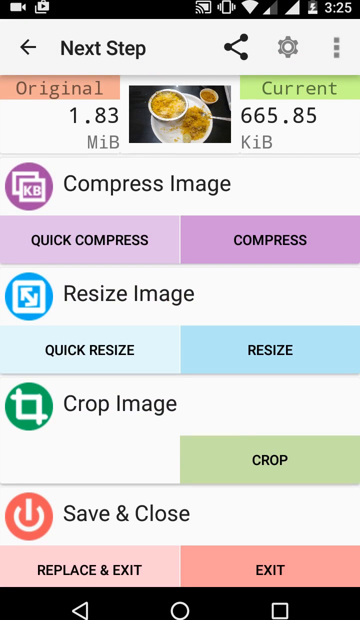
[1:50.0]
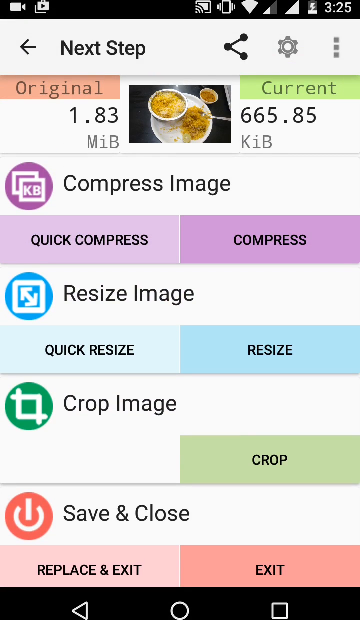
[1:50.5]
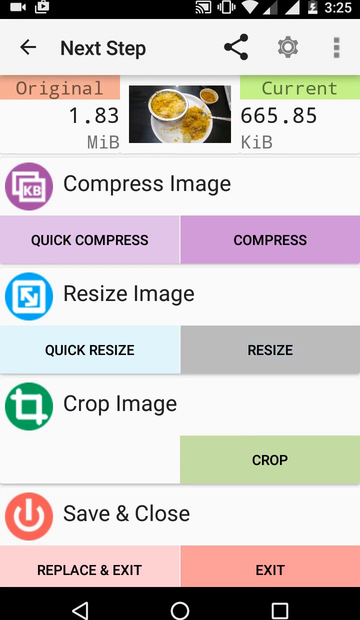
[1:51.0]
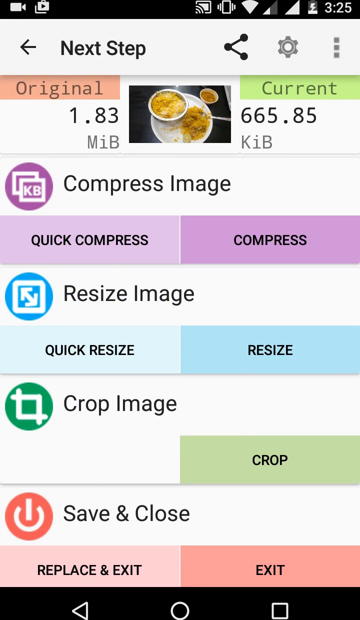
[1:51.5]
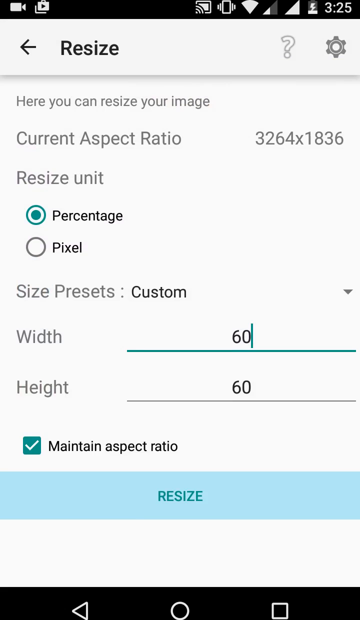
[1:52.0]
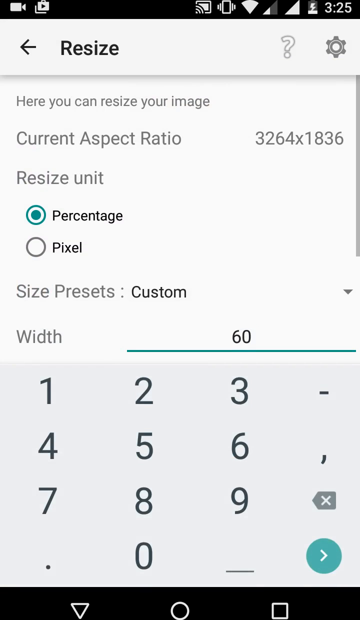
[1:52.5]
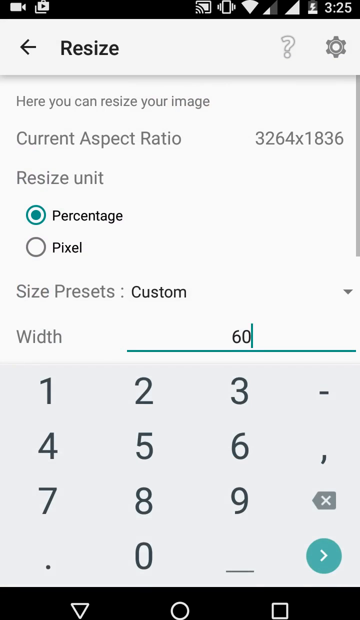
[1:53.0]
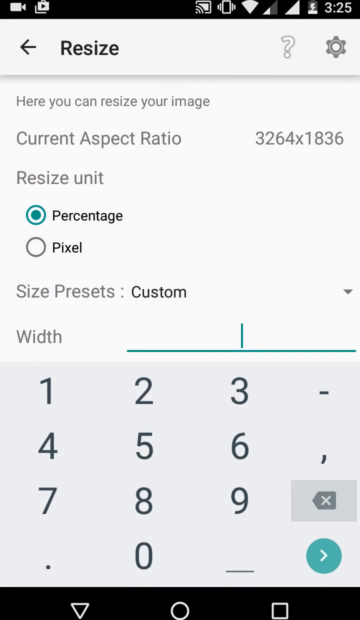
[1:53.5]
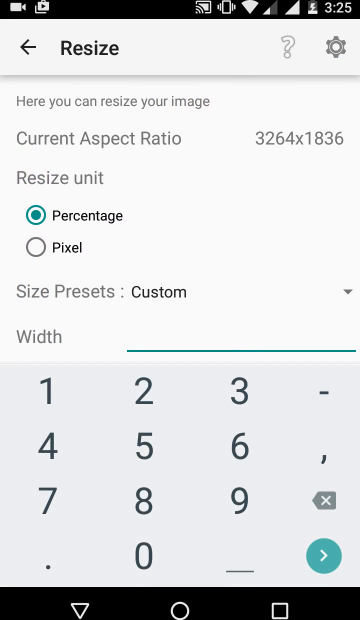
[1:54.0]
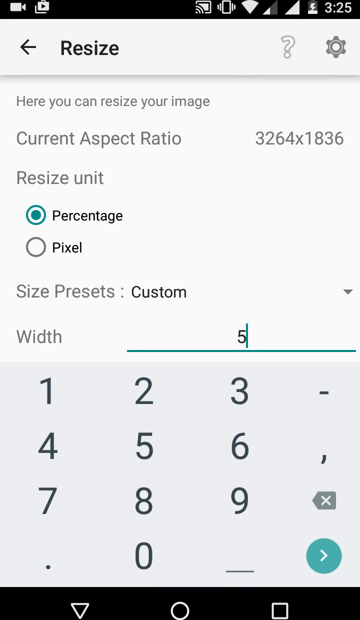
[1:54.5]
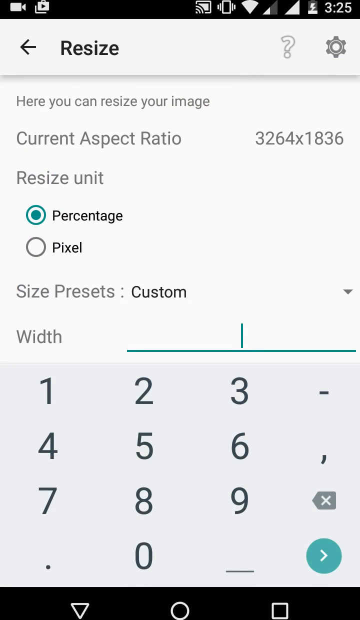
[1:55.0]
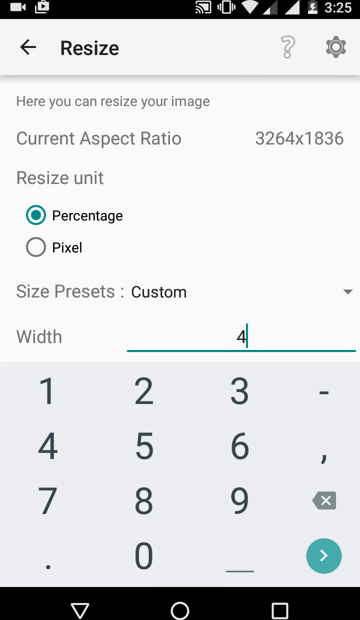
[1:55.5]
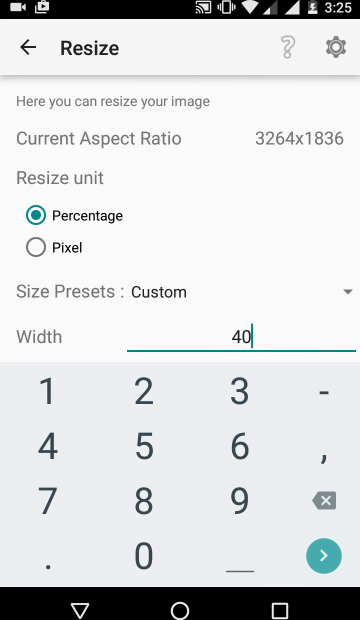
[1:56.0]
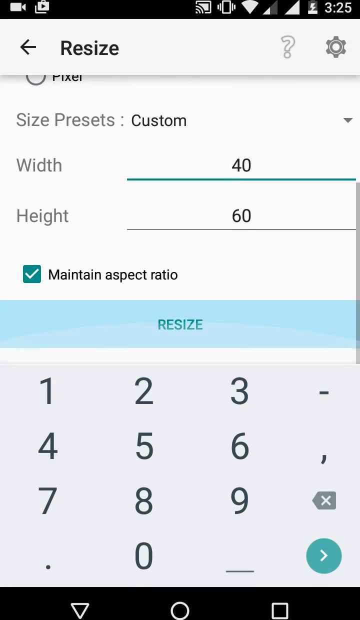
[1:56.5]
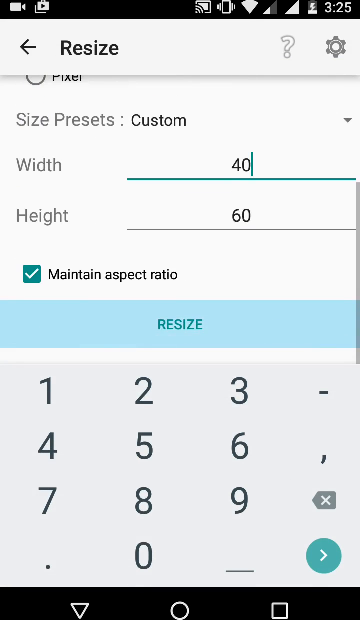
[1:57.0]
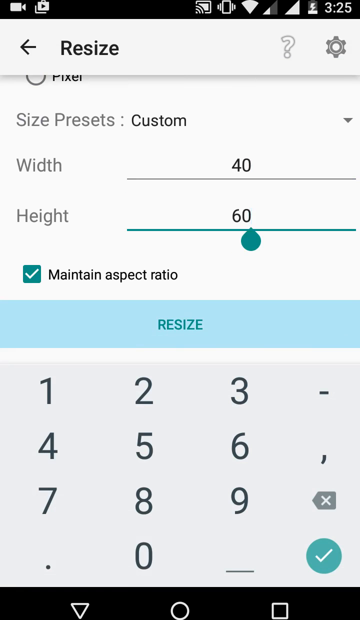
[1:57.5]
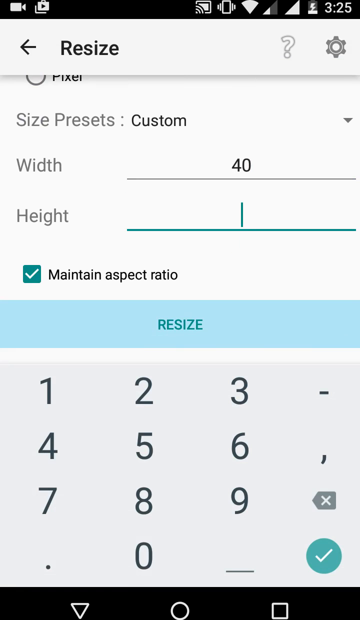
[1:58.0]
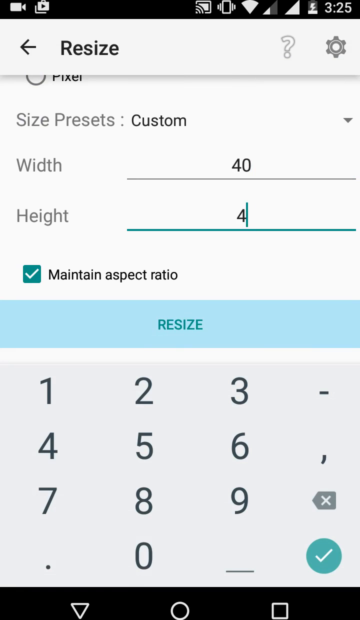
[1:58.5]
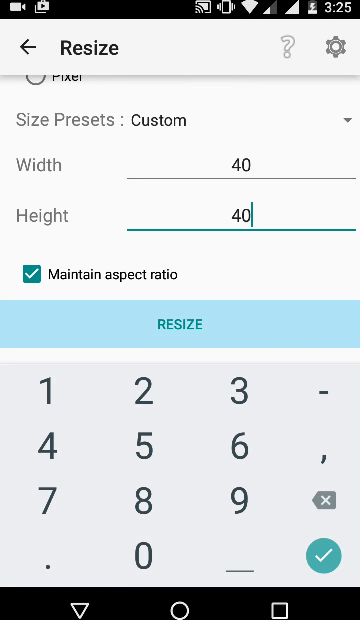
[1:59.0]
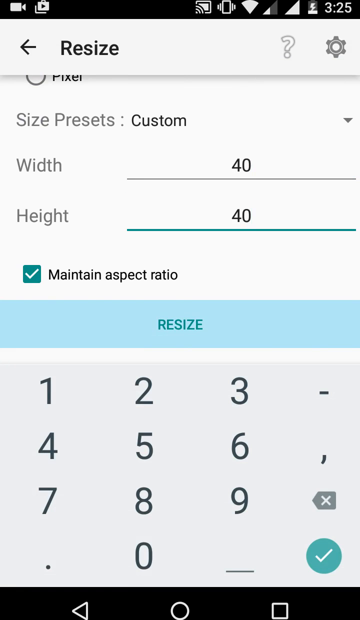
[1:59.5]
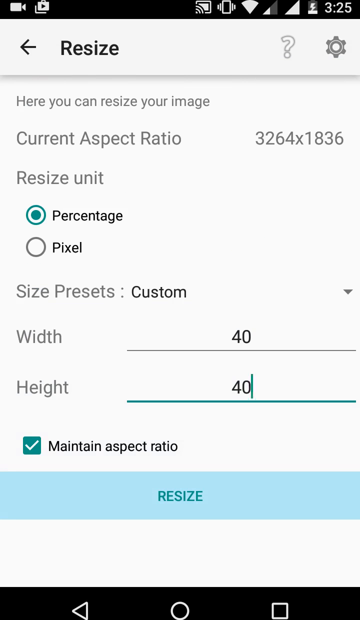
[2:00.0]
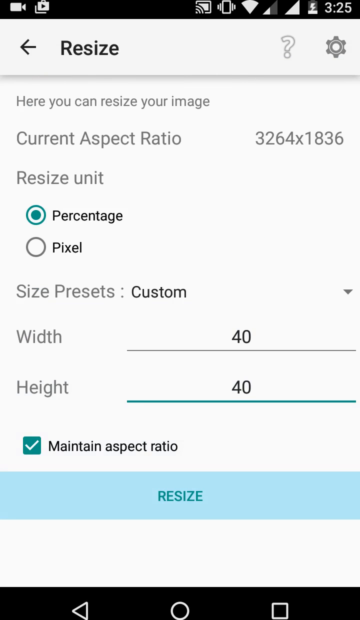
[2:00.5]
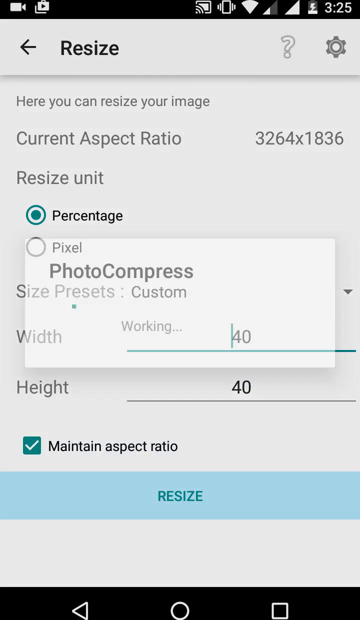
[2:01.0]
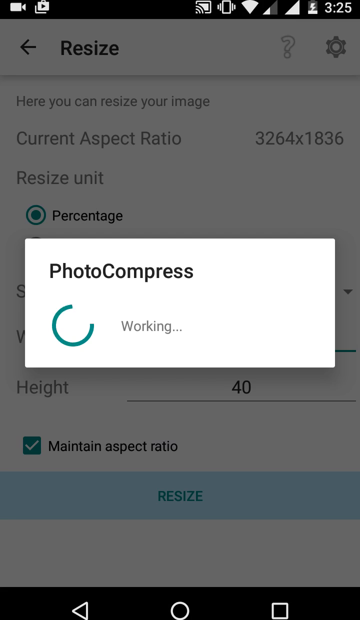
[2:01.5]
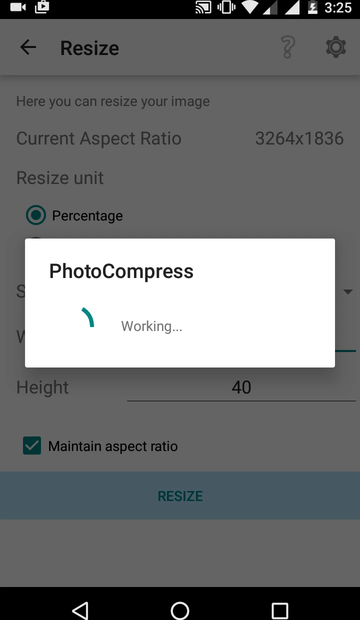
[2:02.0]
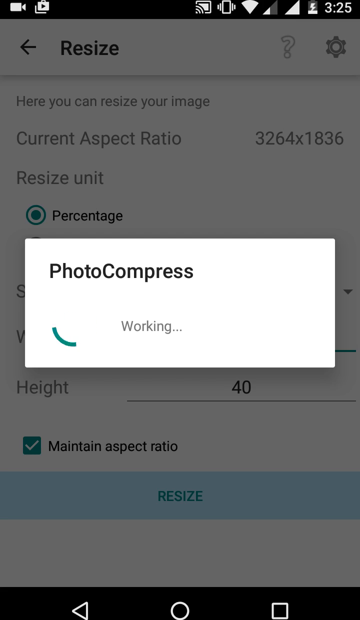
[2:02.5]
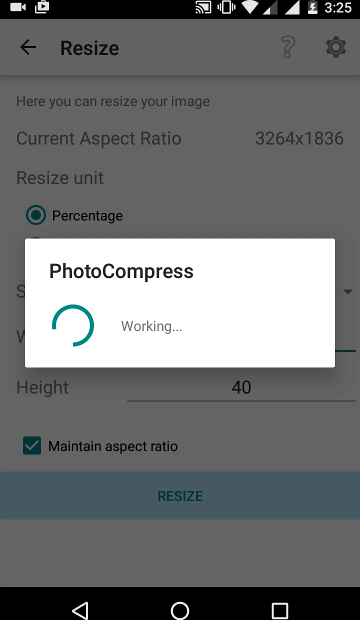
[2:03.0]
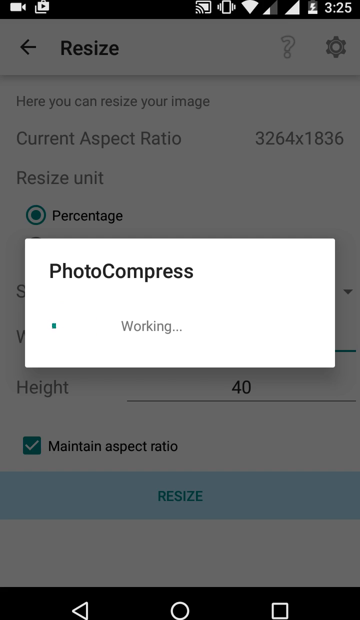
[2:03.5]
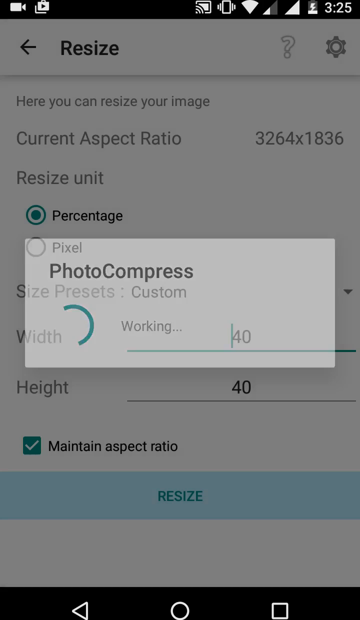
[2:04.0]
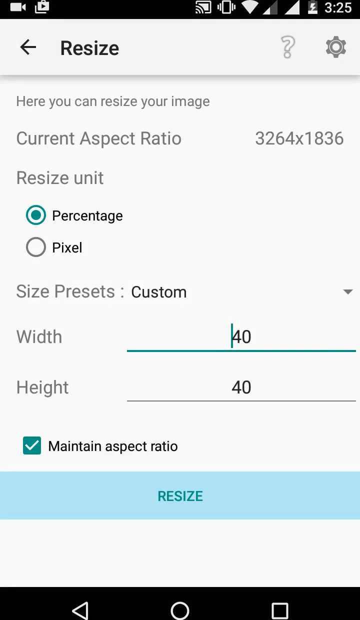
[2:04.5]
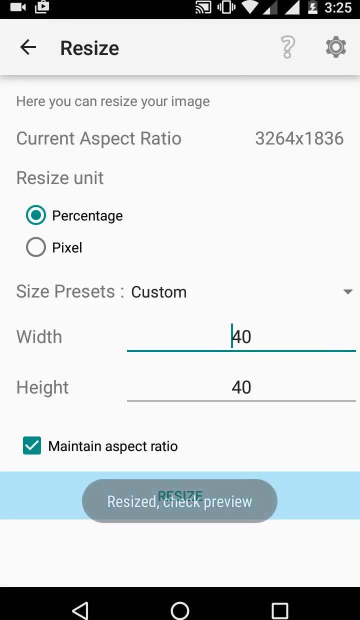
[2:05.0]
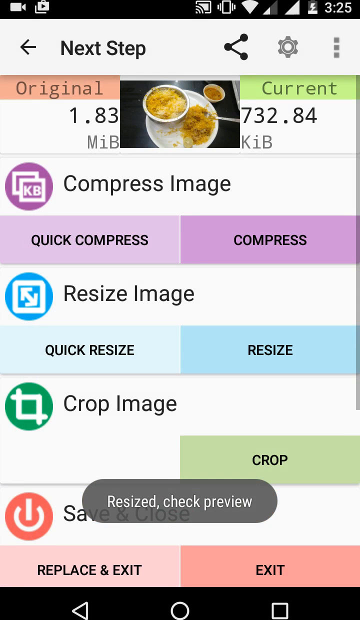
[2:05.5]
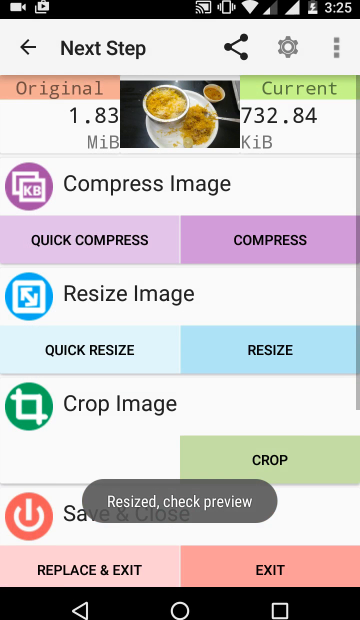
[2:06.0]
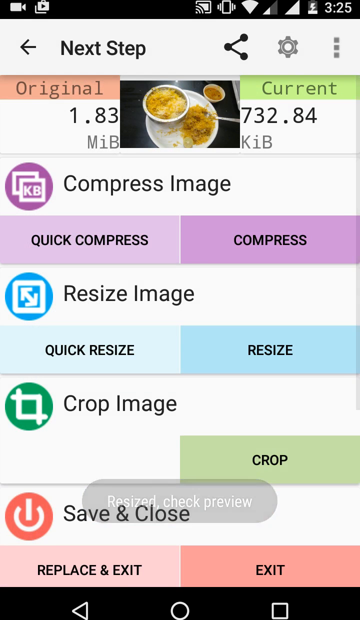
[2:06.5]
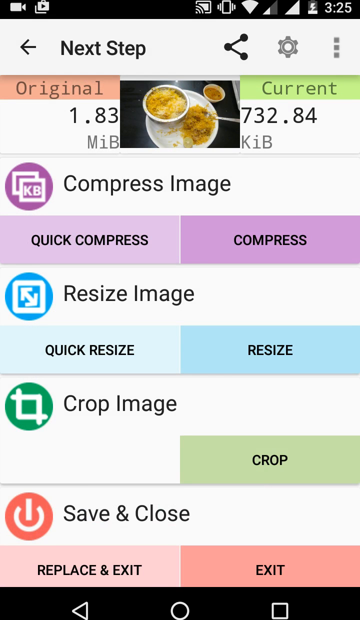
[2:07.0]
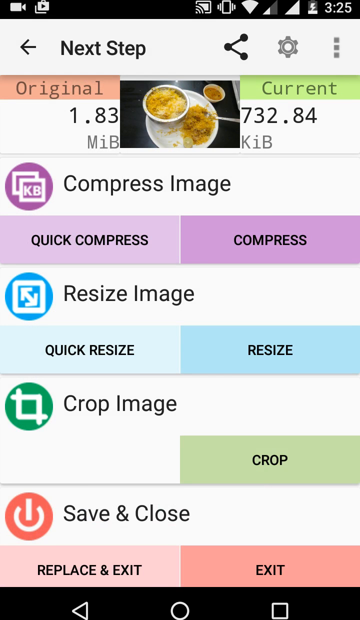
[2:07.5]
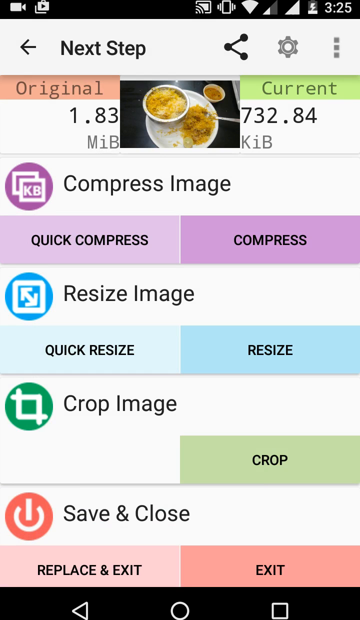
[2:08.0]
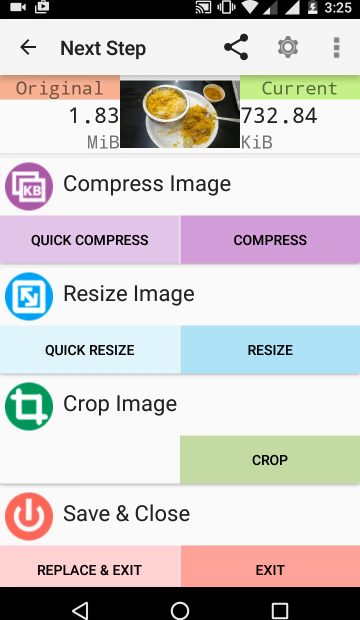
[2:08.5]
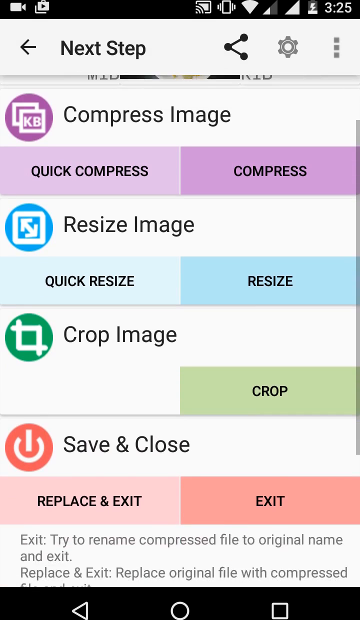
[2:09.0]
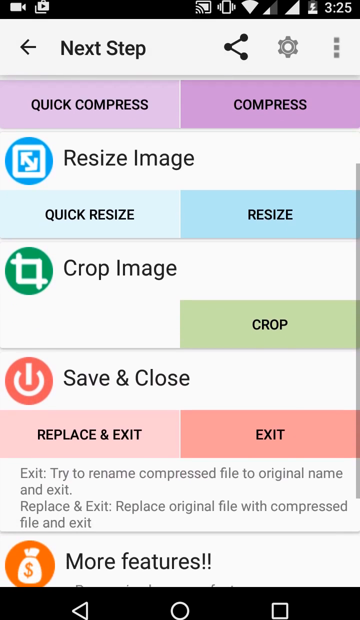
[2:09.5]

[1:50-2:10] The Photo Compress app shows its options, including resizing. After resize is pressed, numbers appear, starting with the width, with 40 entered as an example, and then the height. Resize is pressed again, the app shows it is compressing, and the image is resized. Then save and close is chosen. Options for compress, resize and cropping are shown.